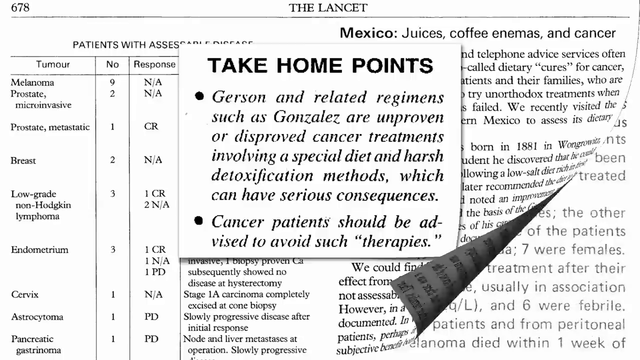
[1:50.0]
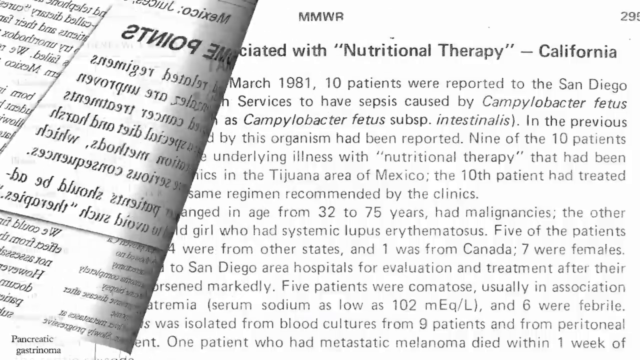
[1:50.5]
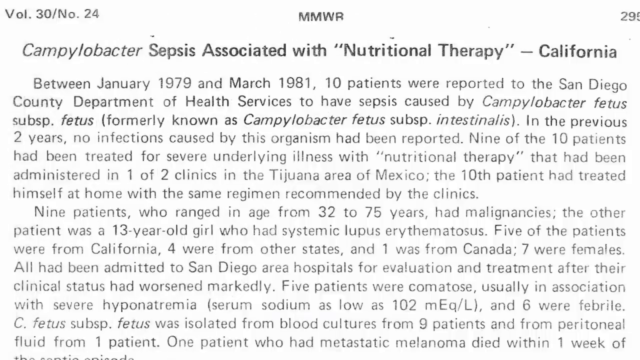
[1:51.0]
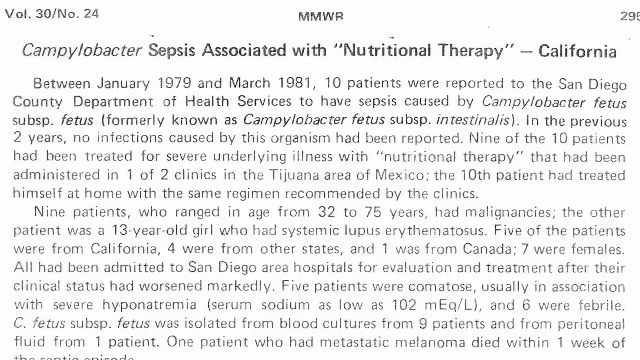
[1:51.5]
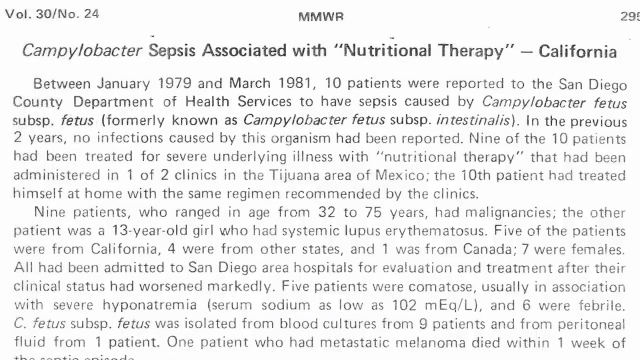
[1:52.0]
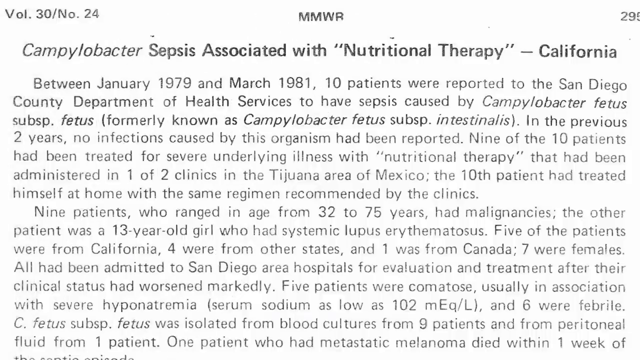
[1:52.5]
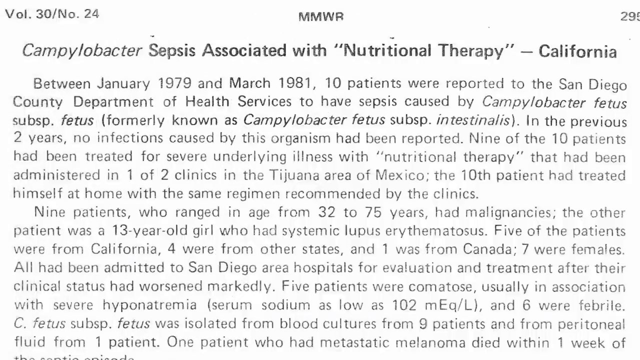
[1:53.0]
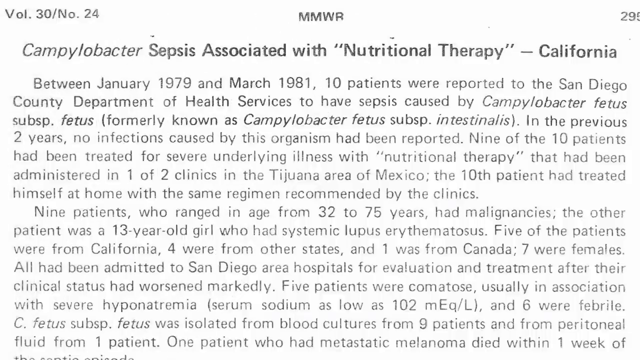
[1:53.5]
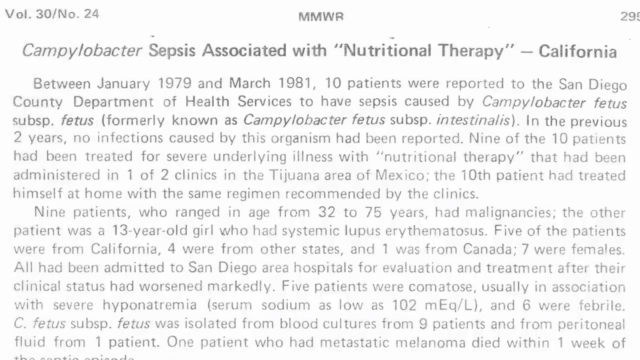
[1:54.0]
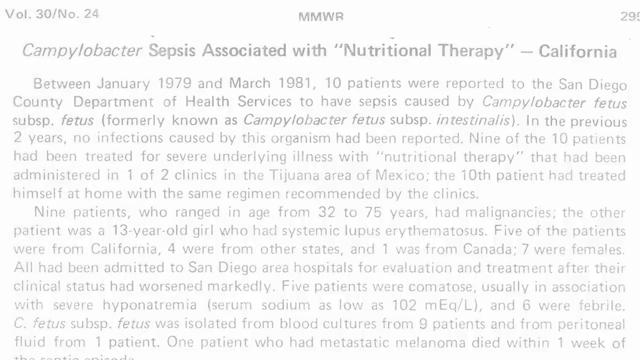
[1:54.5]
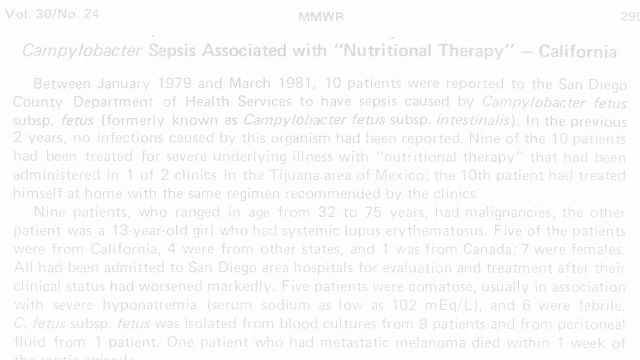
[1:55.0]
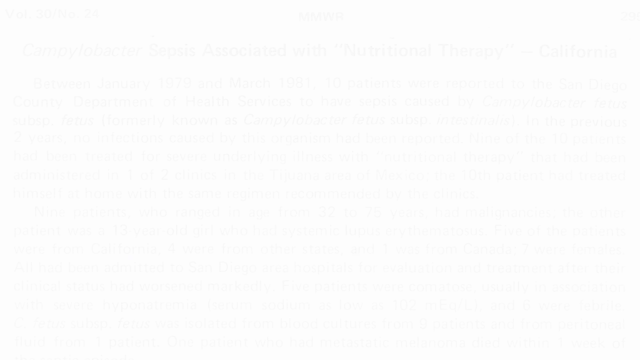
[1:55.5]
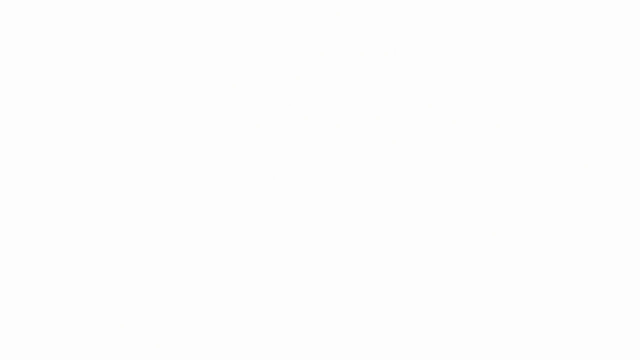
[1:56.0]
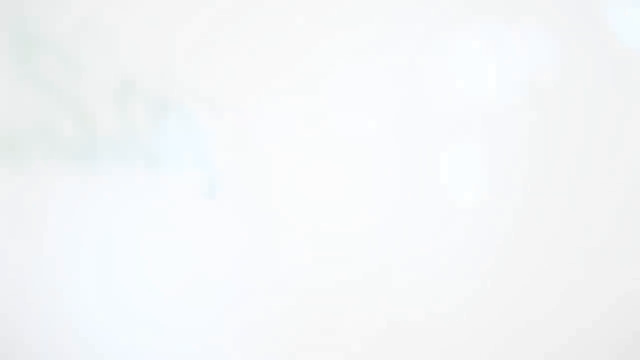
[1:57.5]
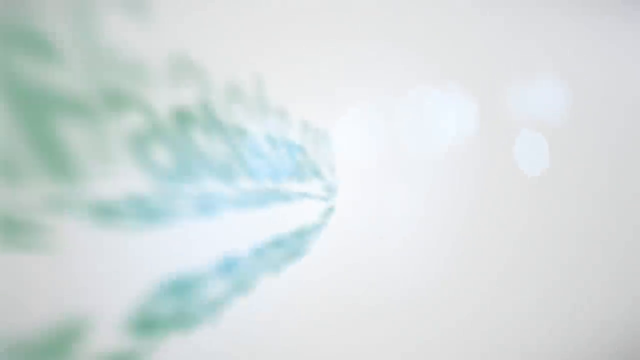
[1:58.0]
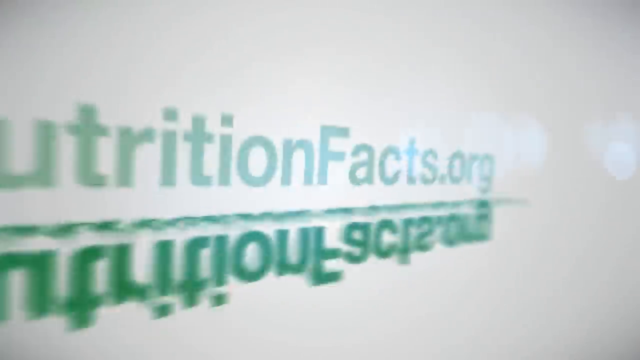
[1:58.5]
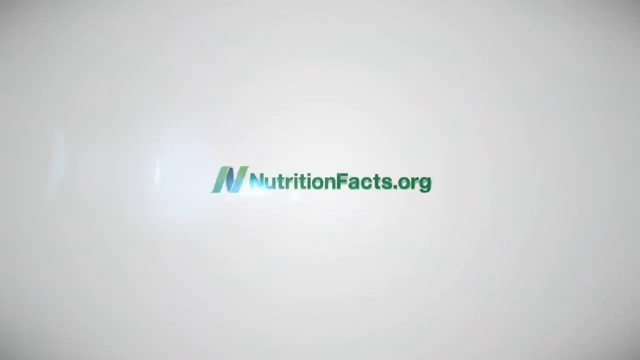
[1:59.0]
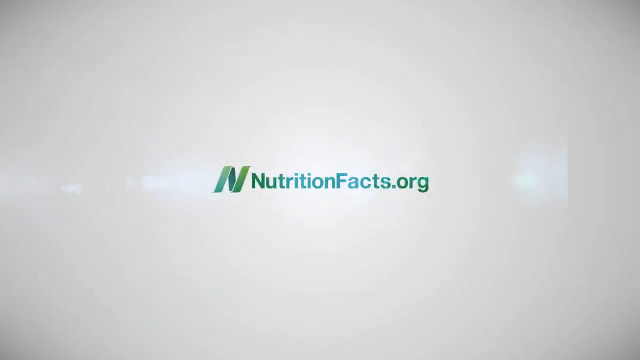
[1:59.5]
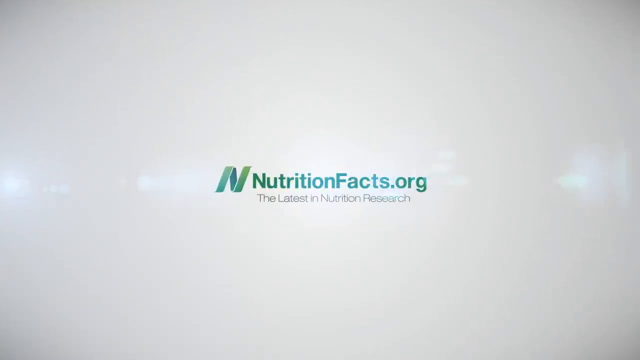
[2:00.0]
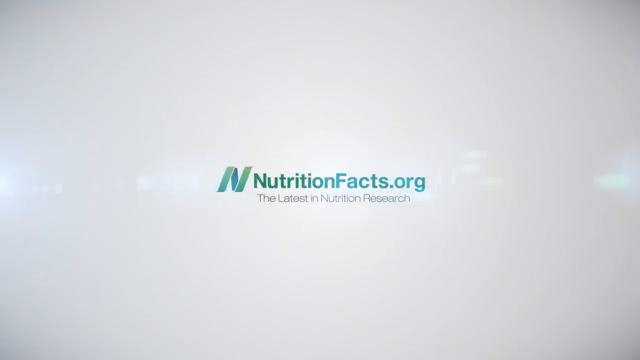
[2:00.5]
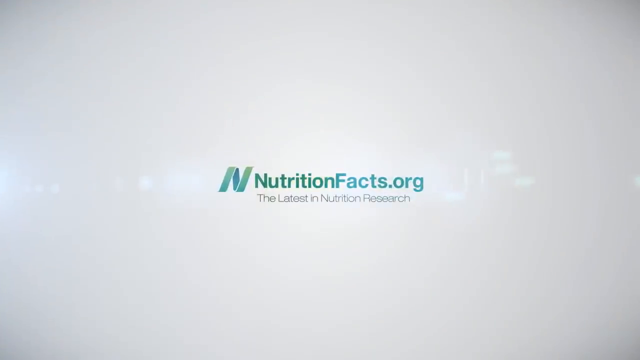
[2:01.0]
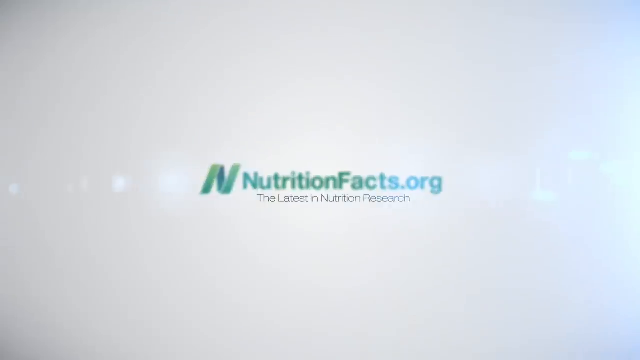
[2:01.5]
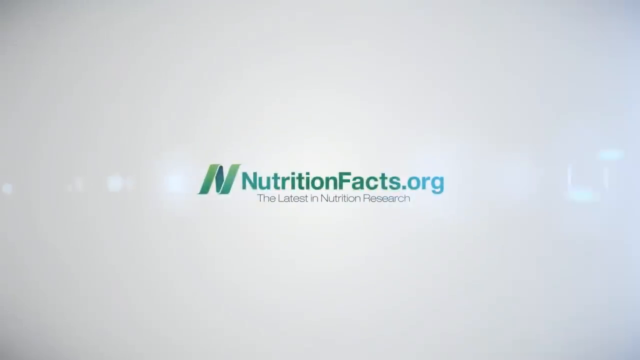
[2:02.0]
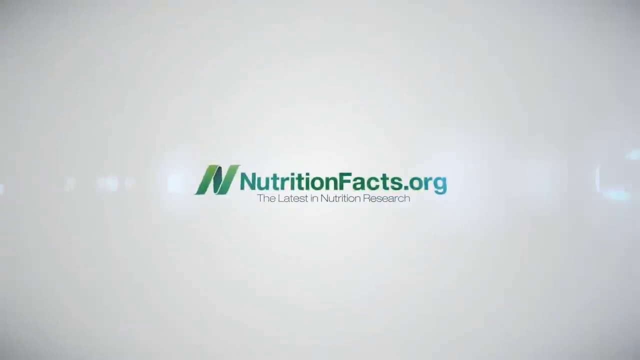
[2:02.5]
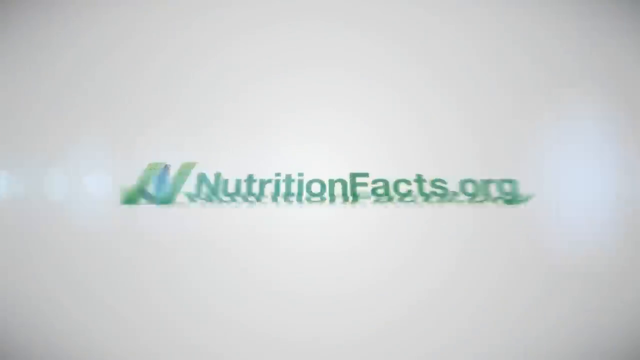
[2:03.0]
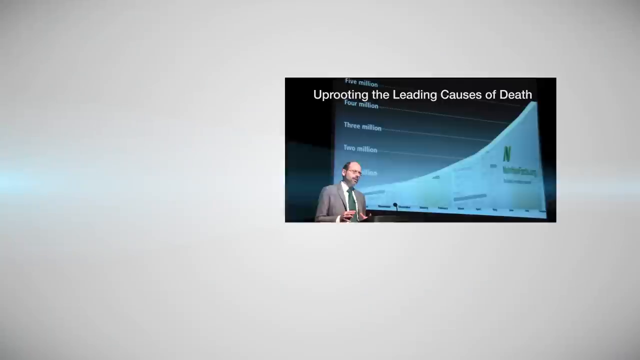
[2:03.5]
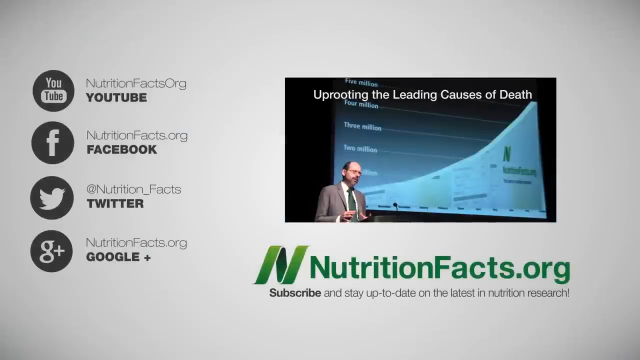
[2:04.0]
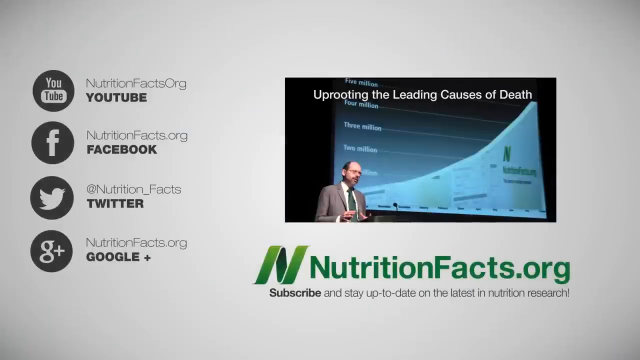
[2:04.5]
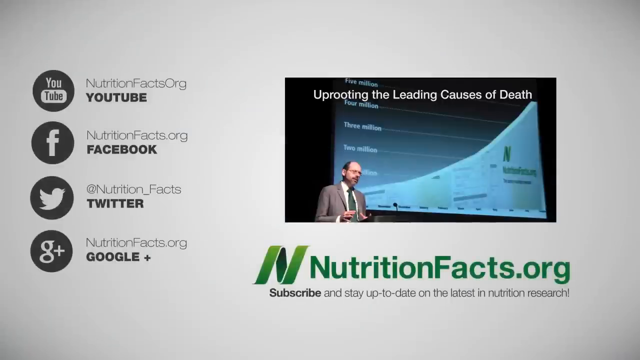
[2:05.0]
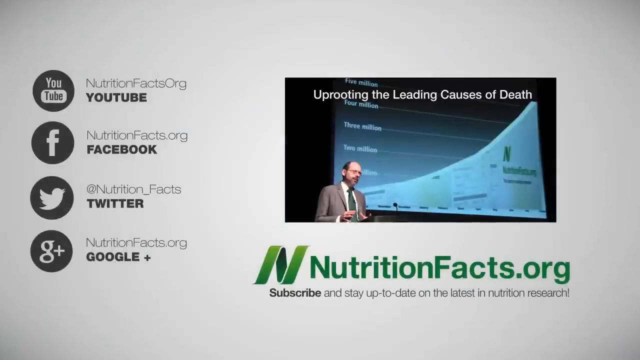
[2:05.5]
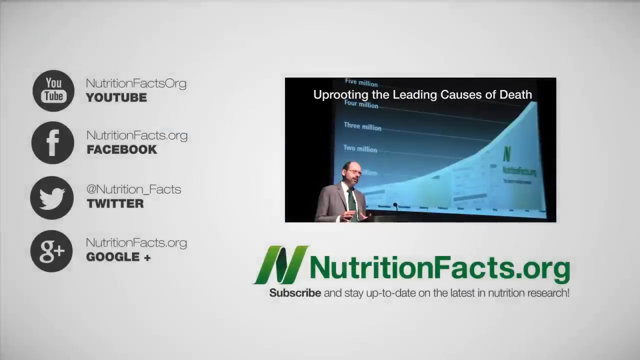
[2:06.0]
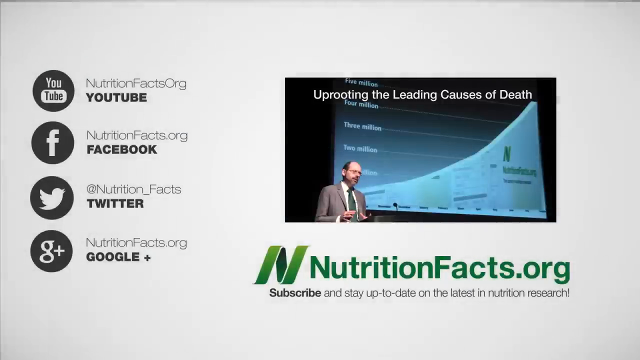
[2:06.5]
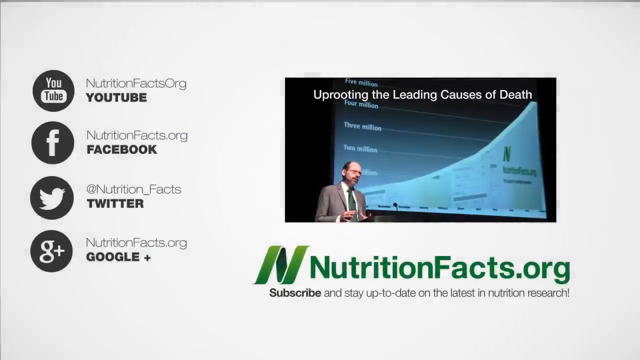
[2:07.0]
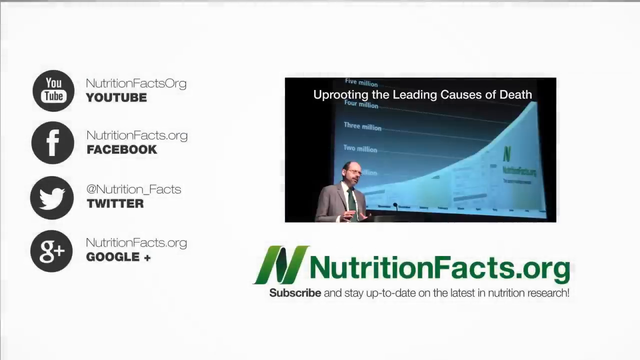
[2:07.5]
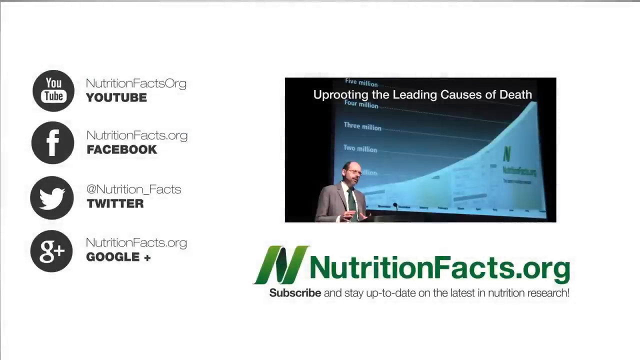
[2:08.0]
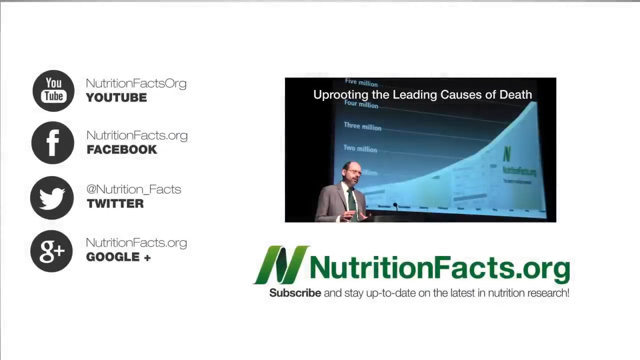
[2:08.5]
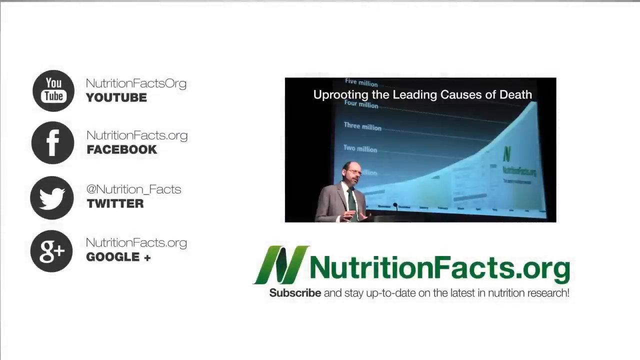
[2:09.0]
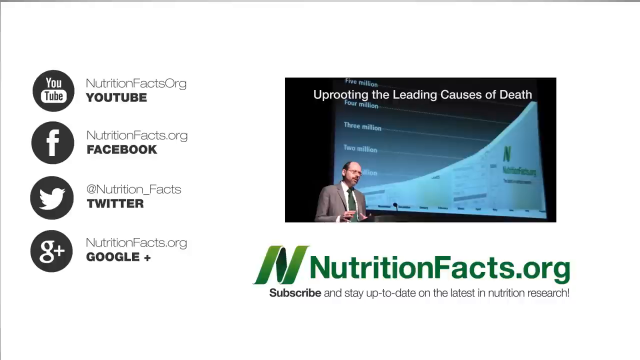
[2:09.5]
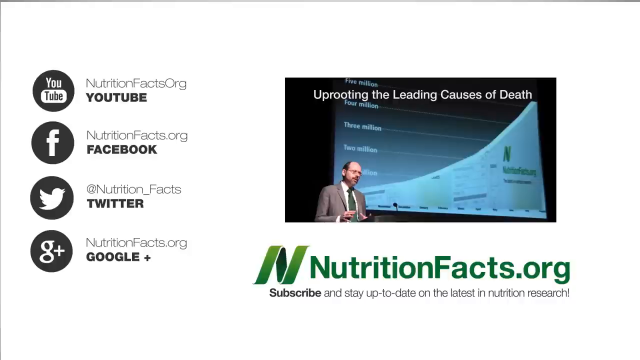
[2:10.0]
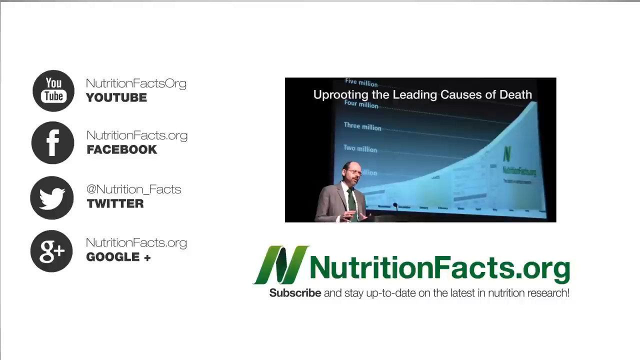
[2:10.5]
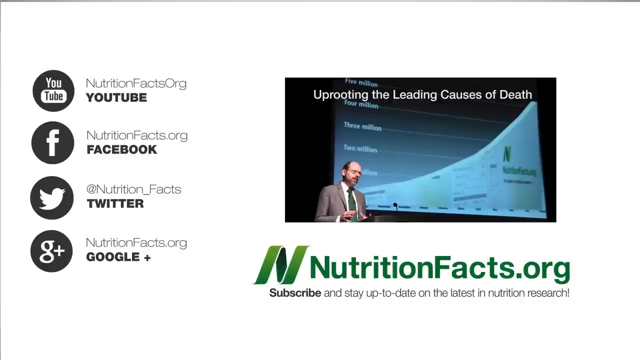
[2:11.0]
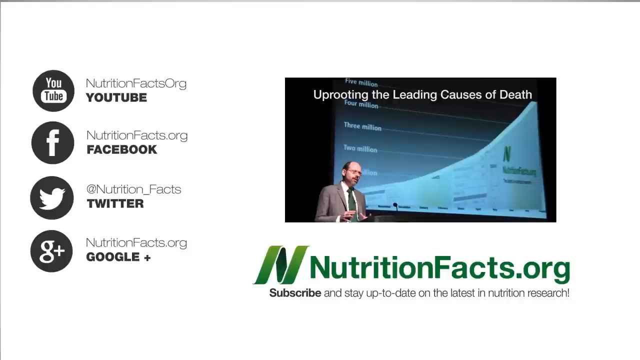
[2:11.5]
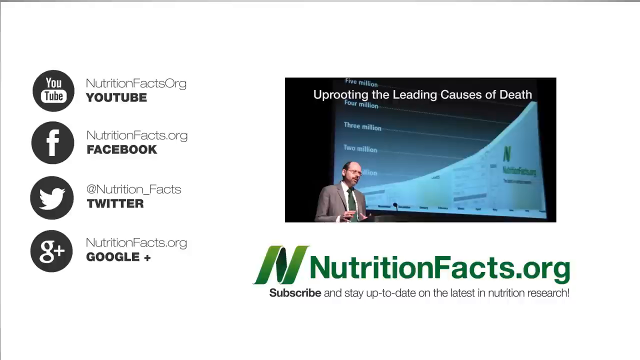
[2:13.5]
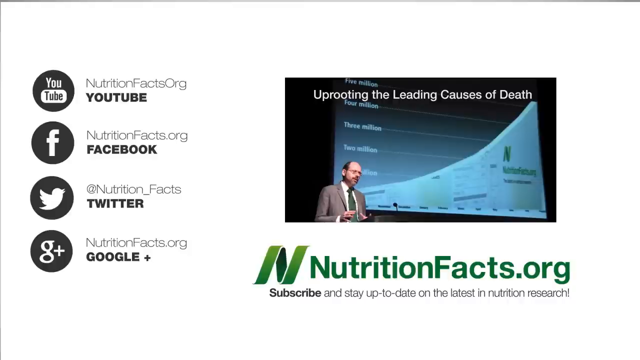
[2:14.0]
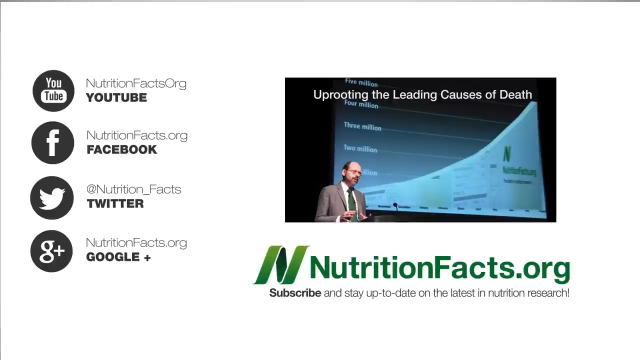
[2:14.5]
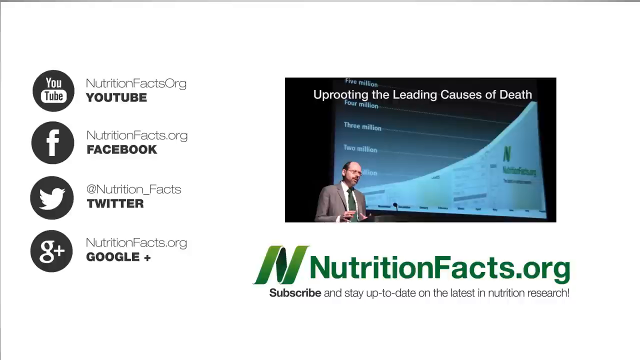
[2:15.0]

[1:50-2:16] A piece of a news article is shown, then peeled away from the bottom right side of the screen, like a sticky note, revealing another news article. At its top left it says "Volume 30 / number 24," in the top middle it says "MMWR," and it reads "Campylobacter sepsis associated with." This fades out to a white screen where words appear. There is a green N that sort of looks like a ribbon taking the shape of an N, and to its right is "nutritionalfacts.org." Underneath, "the latest in nutritional research" appears in black letters. The text starts off green, fades to blue, then fades back to green. The video then switches to another page with the same Nutritional Facts at the bottom, reading "subscribe and stay up-to-date on the latest nutritional research." On the left side of the screen it says "NutritionalFacts.org, YouTube, NutritionalFacts.org, Facebook, NutritionalFacts.org, Twitter, NutritionalFacts.org, Google."